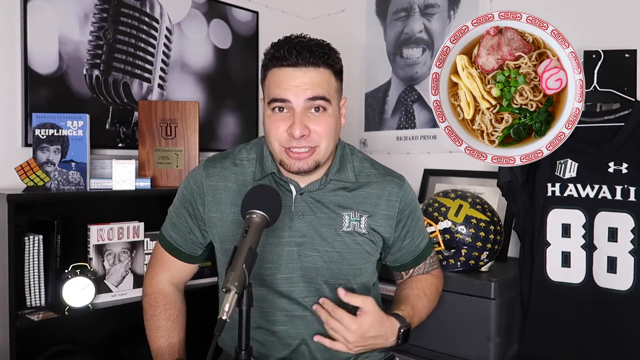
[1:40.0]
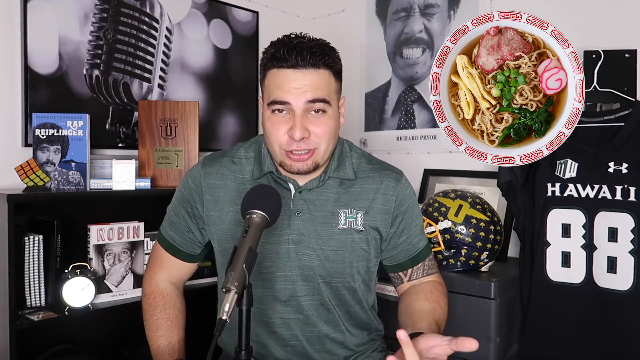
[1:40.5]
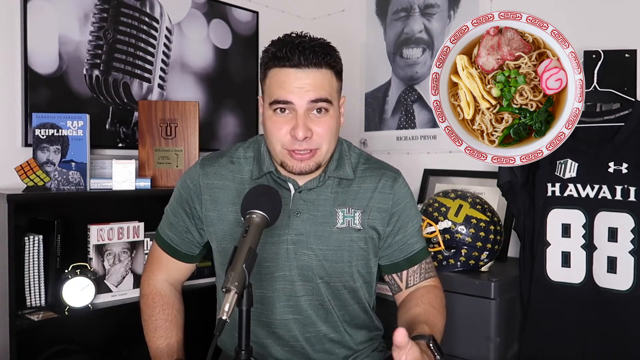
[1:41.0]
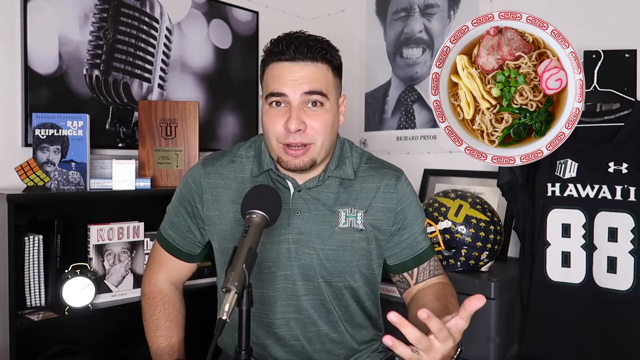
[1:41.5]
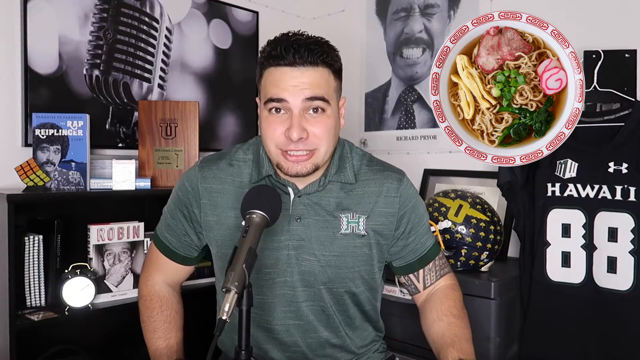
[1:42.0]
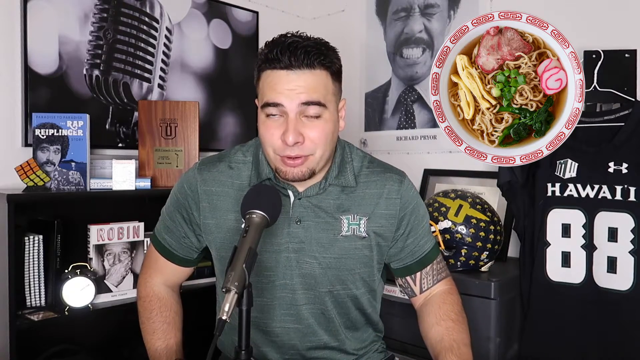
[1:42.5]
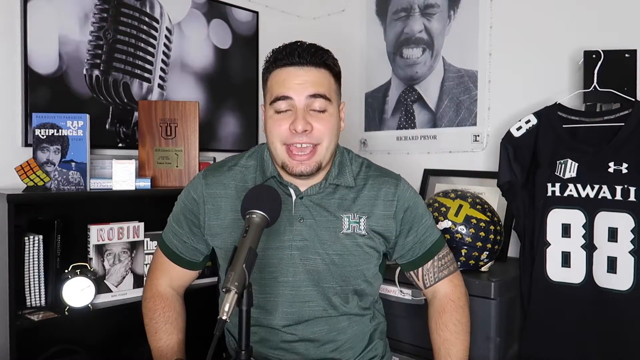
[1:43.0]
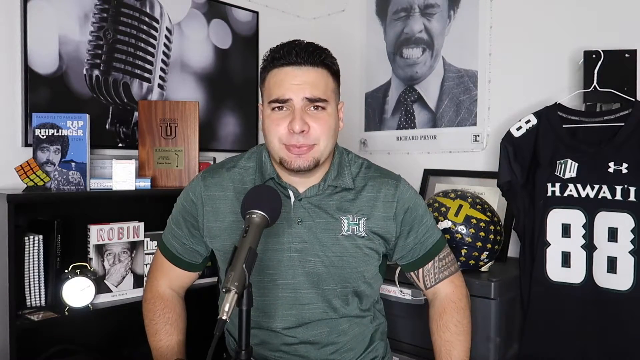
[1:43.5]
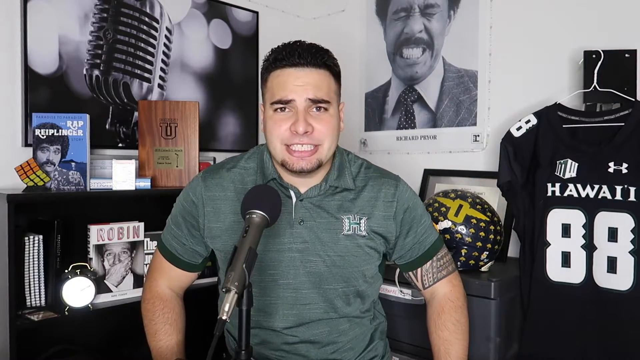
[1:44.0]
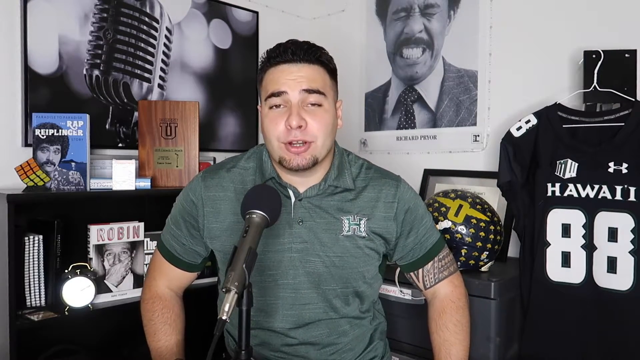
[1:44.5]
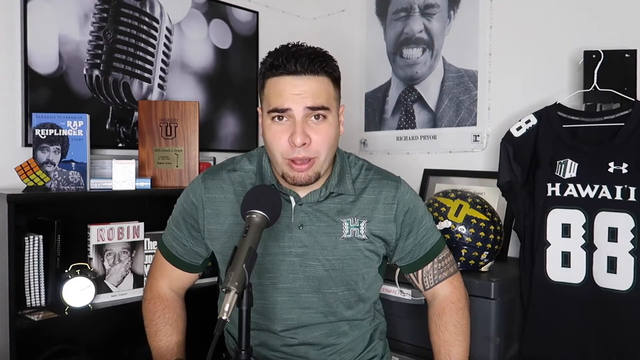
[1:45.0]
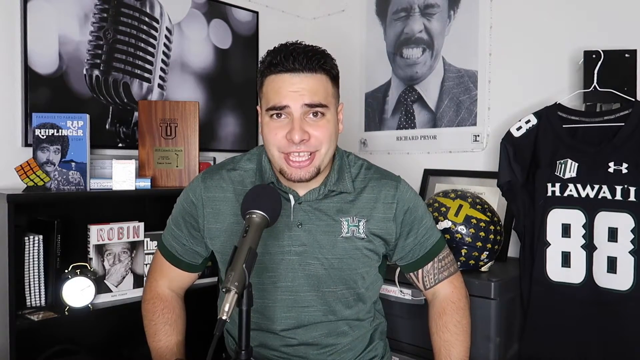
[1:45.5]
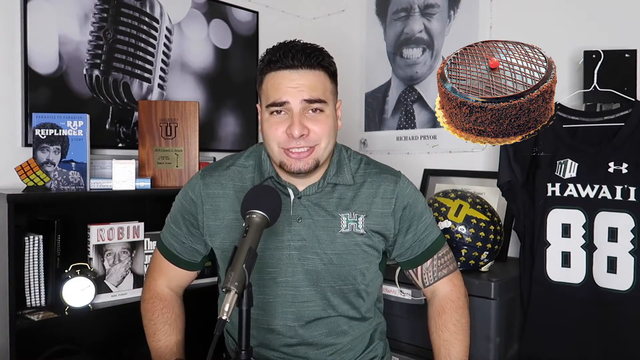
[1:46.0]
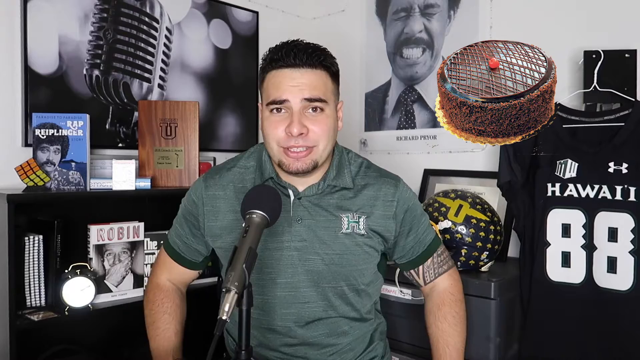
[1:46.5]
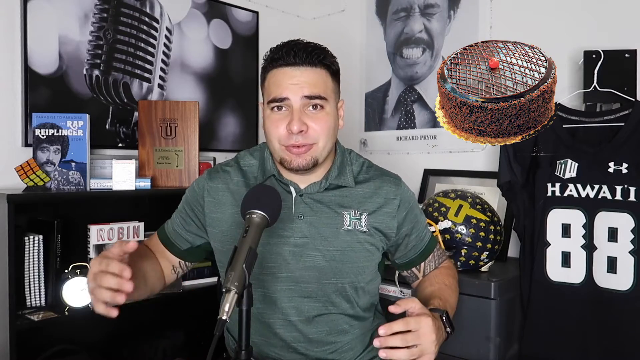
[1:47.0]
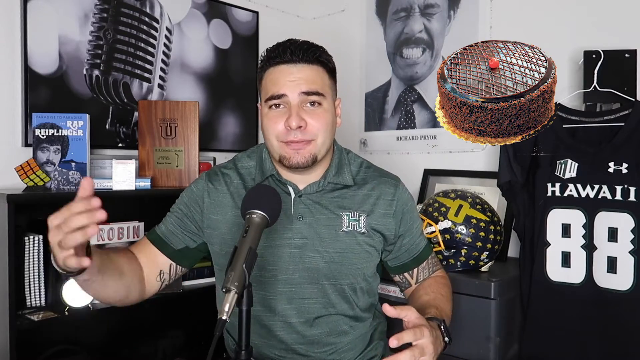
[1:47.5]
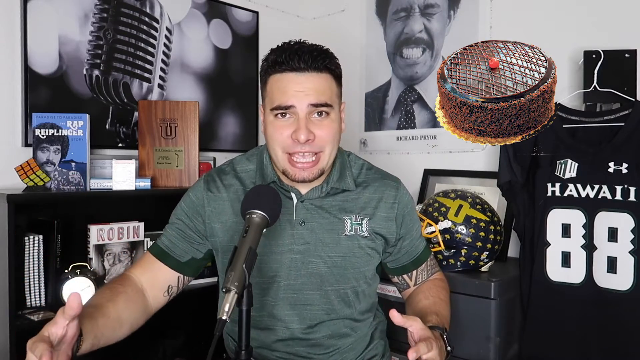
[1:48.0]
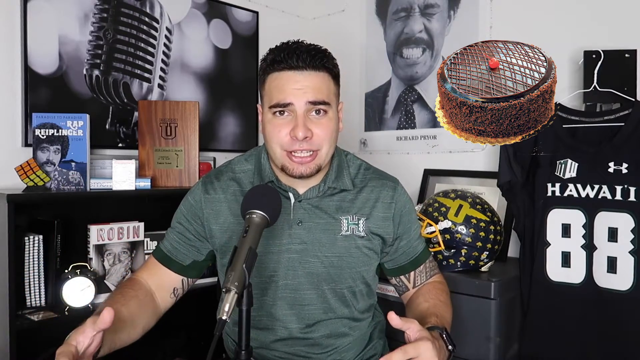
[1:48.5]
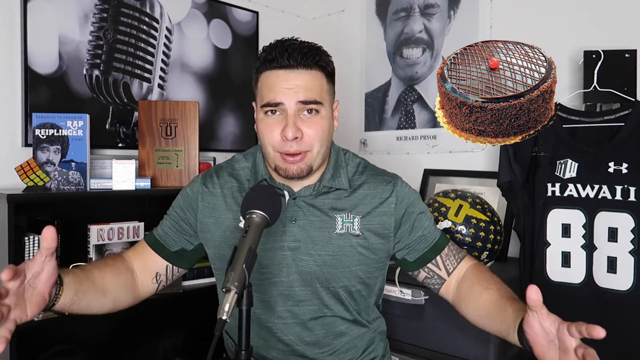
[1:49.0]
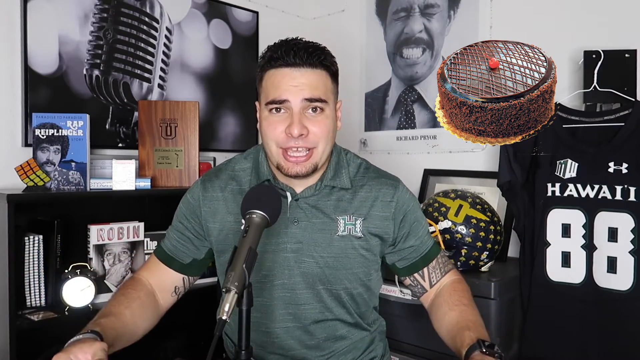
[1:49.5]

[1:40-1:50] The plate of Japanese-style ramen disappears from the screen and is replaced by a chocolate cake on a small golden plate. Chocolate flakes surround its entire outer layer, and the top has a crisscross pattern of chocolate fudge topped by a single berry. The man raises one hand in a kind of 'move on' gesture, then raises both hands as if in excitement as he speaks towards the camera. He apparently enjoys the cake being displayed.